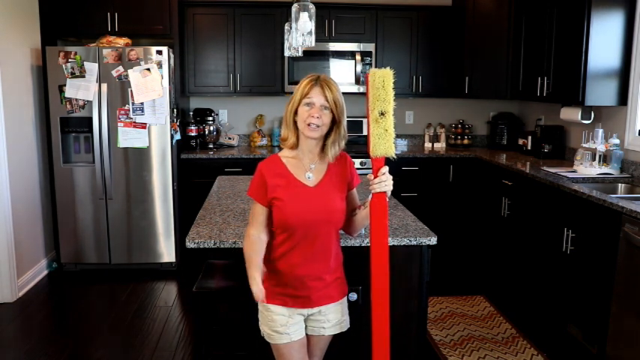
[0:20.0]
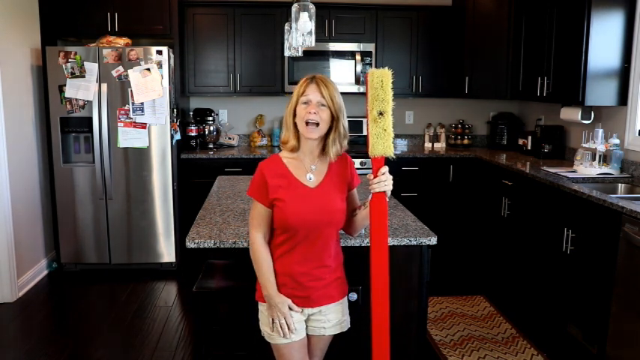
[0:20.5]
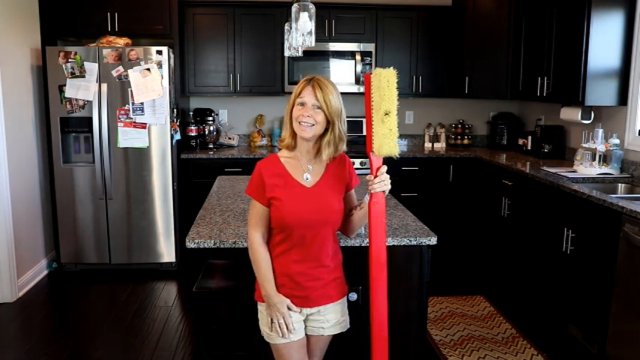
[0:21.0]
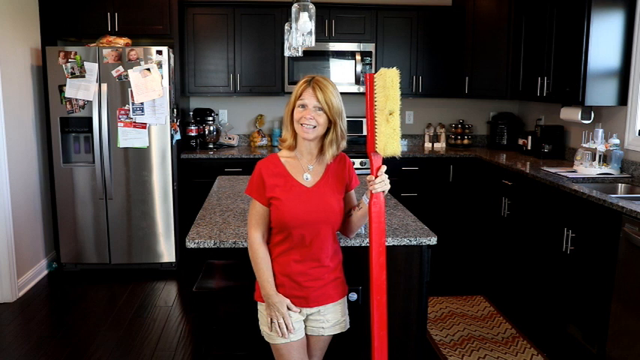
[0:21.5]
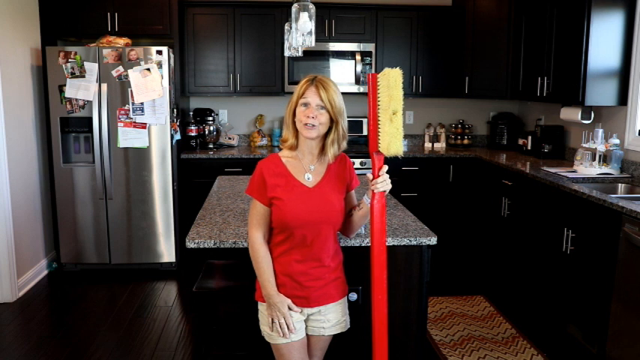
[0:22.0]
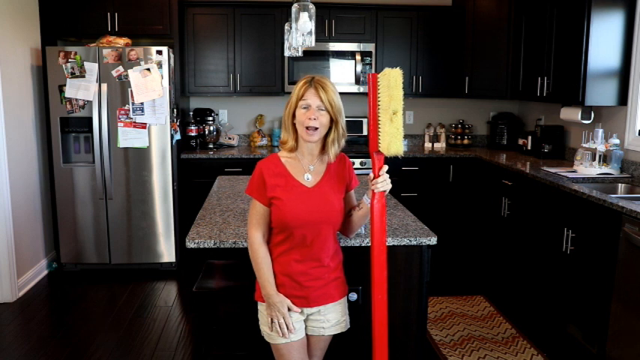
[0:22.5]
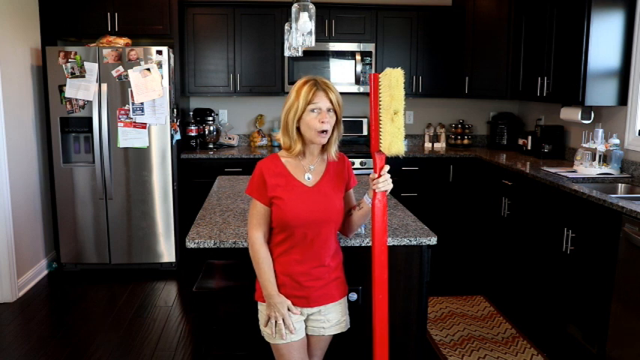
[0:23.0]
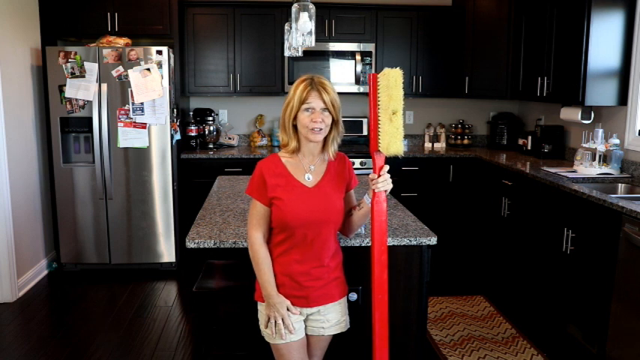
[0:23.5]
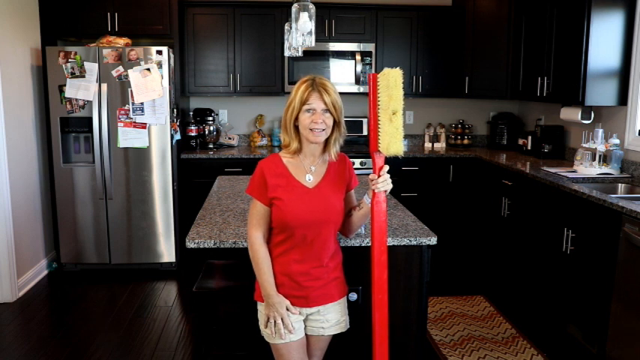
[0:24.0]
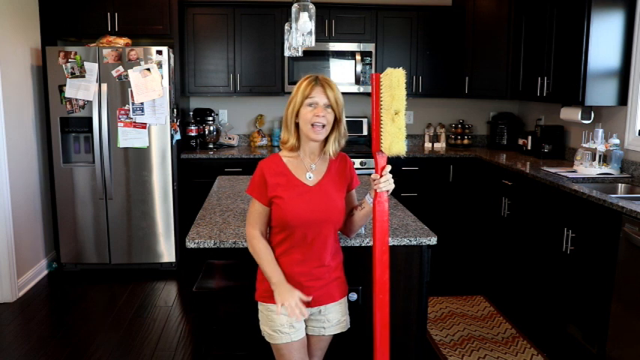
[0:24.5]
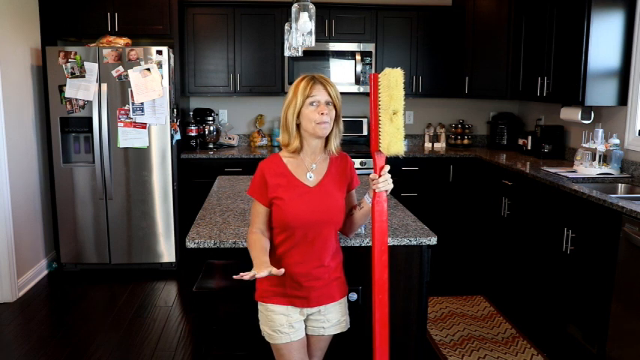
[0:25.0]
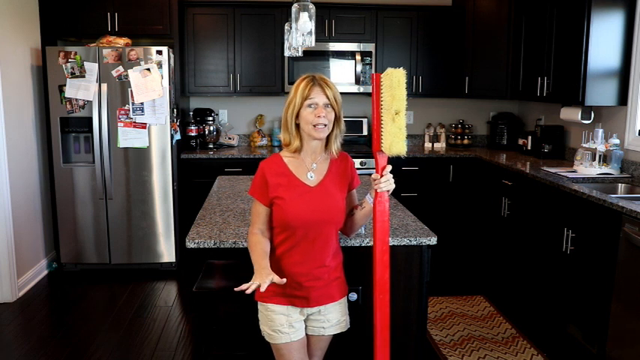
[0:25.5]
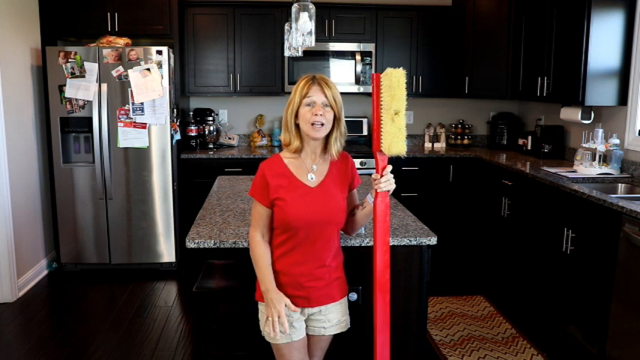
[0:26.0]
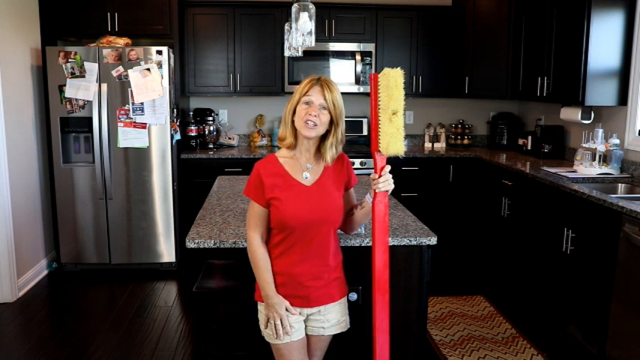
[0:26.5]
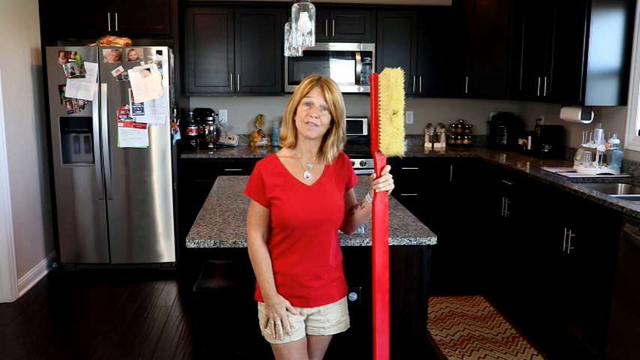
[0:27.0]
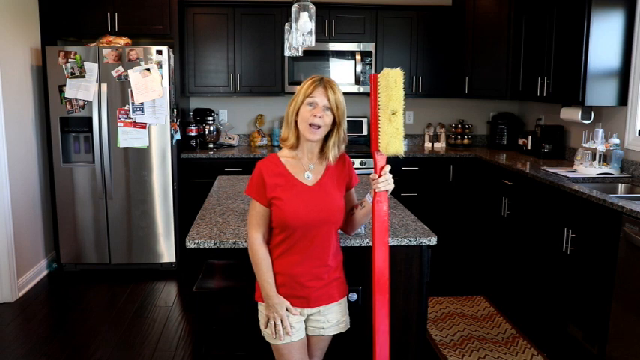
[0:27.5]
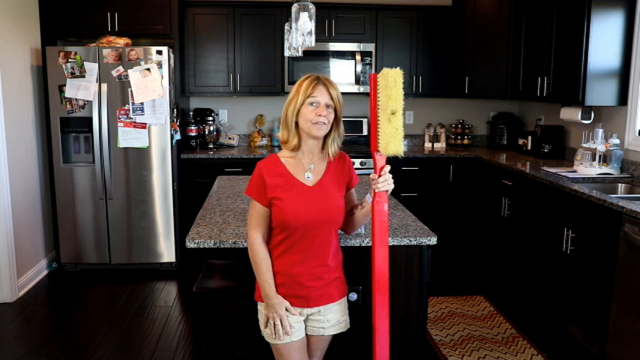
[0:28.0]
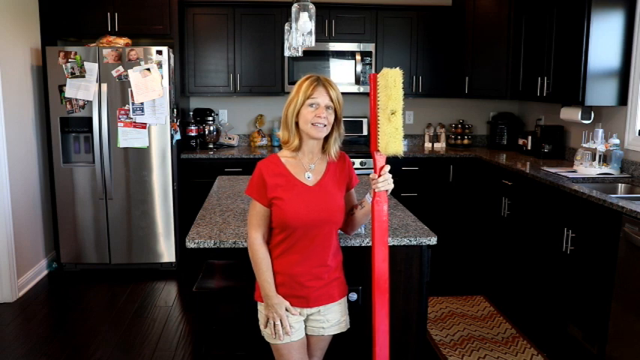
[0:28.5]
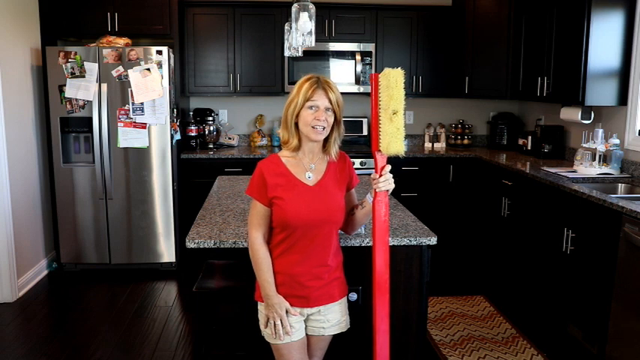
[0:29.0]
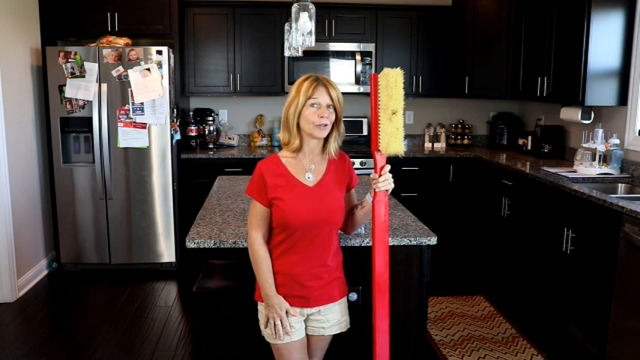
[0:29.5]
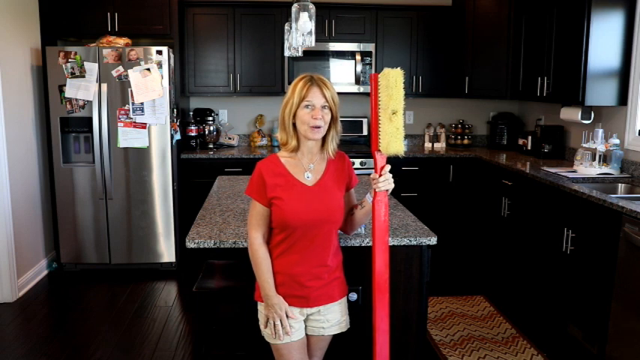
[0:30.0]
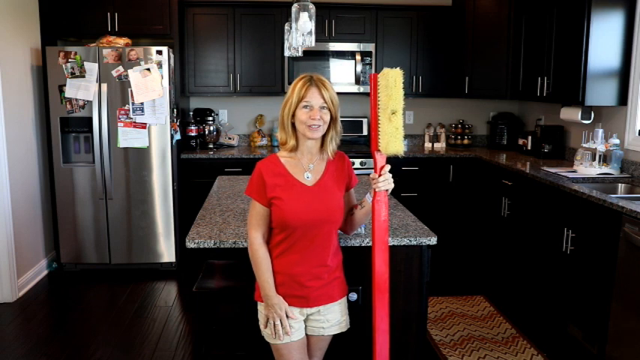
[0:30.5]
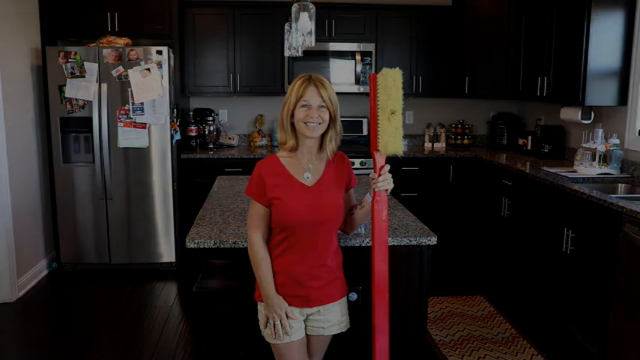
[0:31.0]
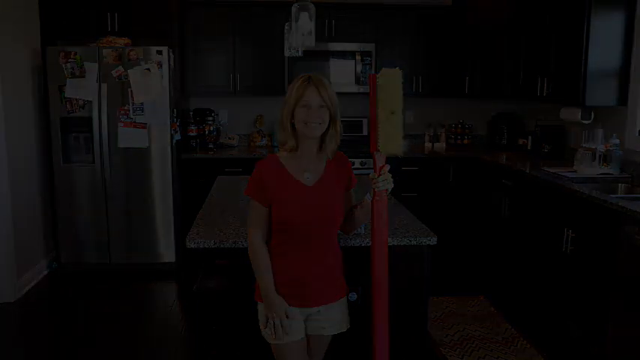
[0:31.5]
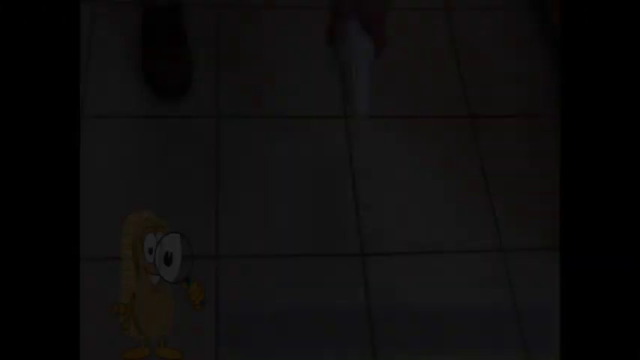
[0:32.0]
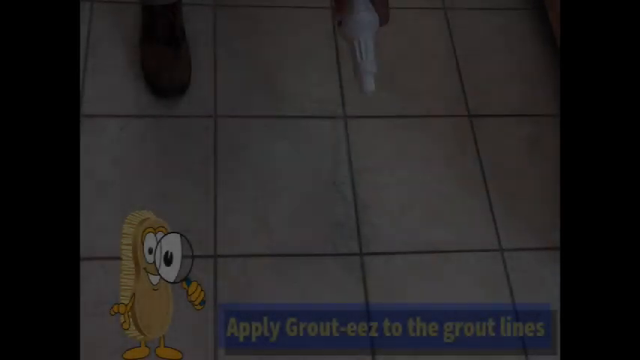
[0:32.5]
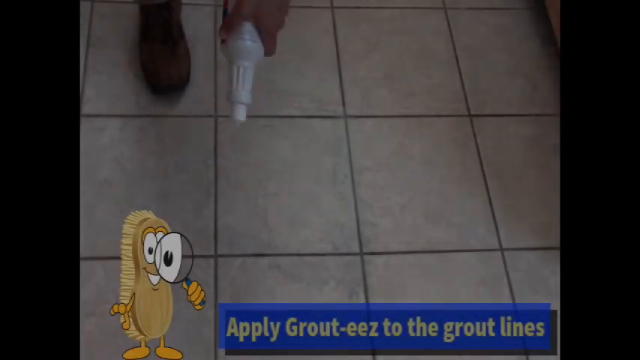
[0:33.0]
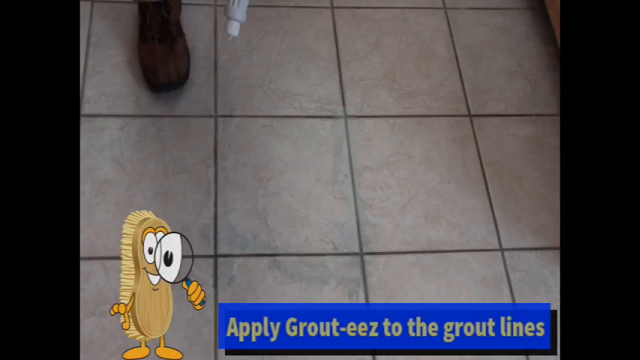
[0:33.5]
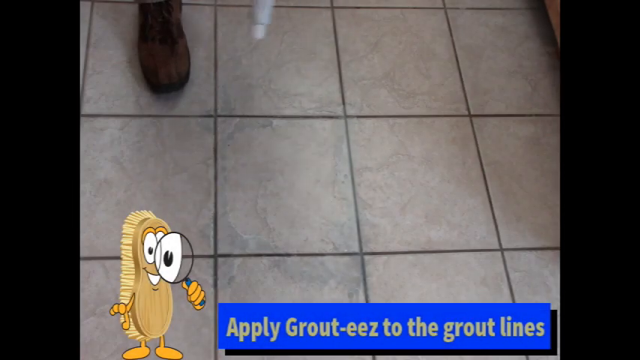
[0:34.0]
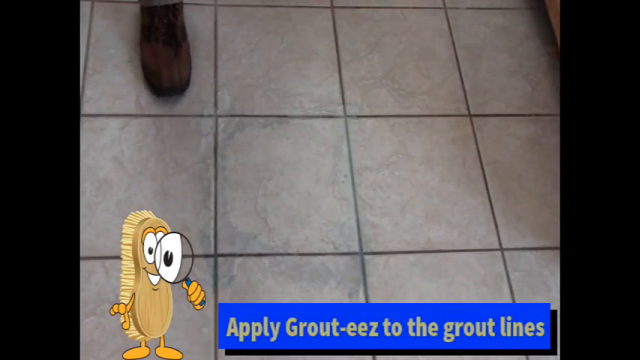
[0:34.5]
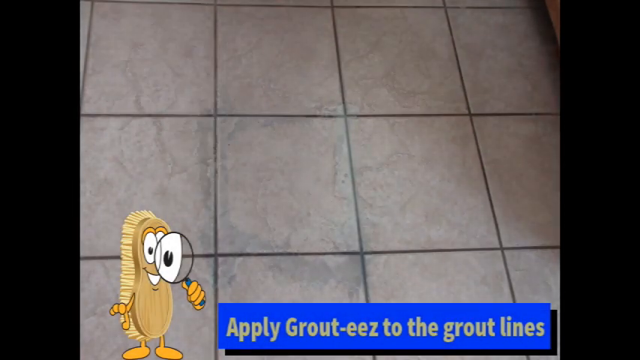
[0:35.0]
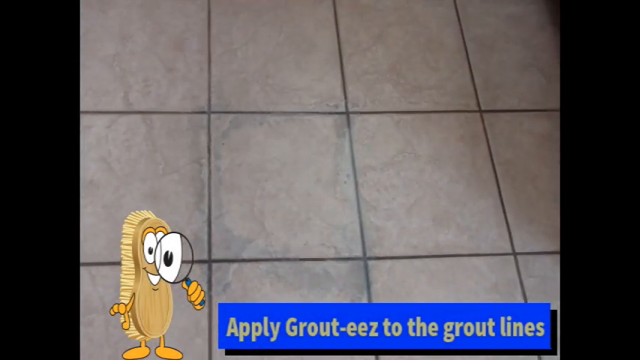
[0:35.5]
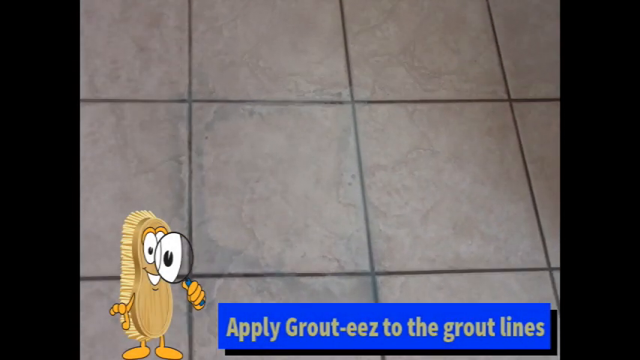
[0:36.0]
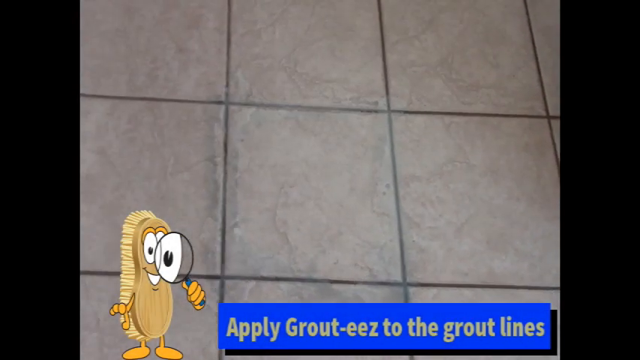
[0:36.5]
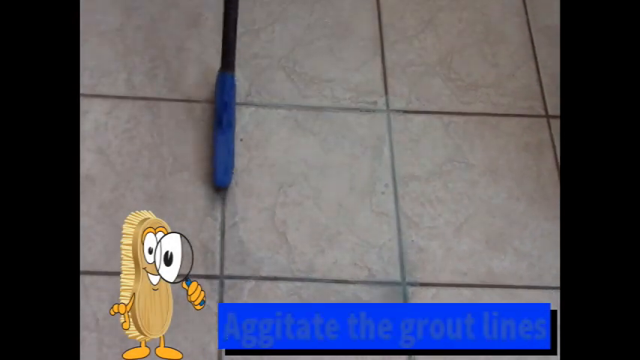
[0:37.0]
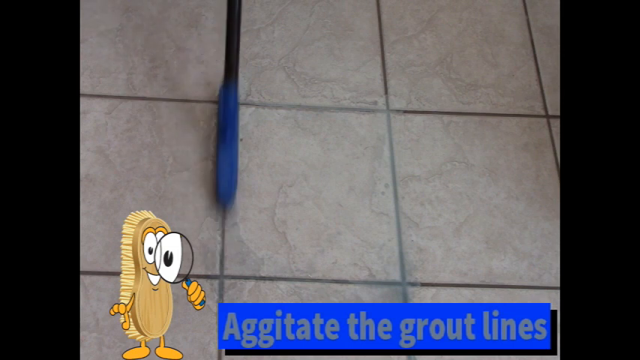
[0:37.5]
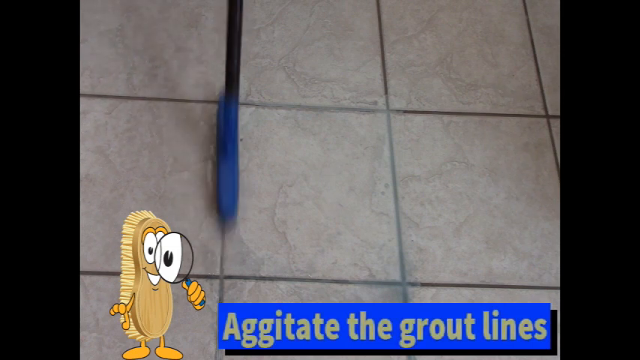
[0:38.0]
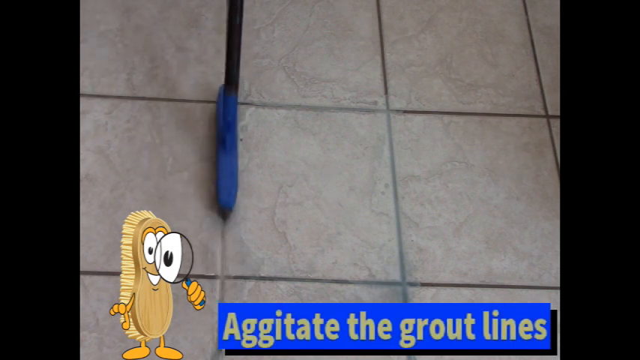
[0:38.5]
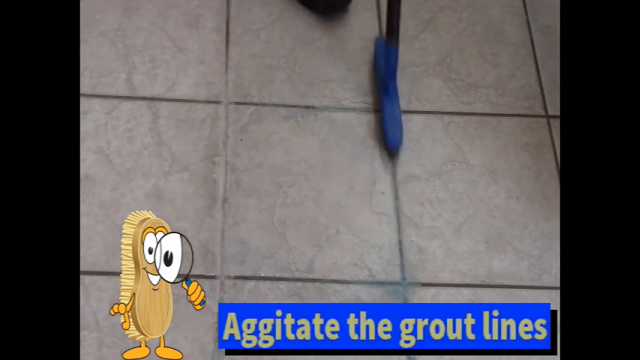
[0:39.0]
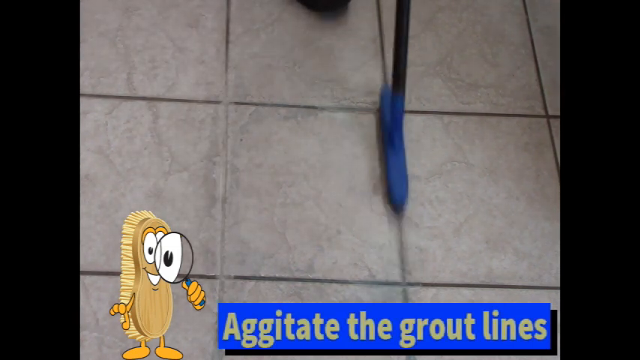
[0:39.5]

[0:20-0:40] A woman is at the center, wearing a red short-sleeved shirt and short gray shorts. In her left hand she holds a red, long-handled toothbrush with yellow bristles. She is standing on a dark brown hardwood floor. The cabinets behind her are all dark brown with silver-lined handles. On the left side there is a white-framed, slightly off-white wall, and beside it a silver metal fridge with white sheets of paper and photographs of children on the front. At the far right there is a white frame and a silver sink. Directly behind her is a white-and-black dotted granite countertop and a silver-and-black microwave, with a silver-and-black stove below it. At the top are two glass lightbulb lights. The scene changes to a gray tiled floor. A blue box below reads in white lettering "supply grout, easy to the grout lines." On the left side is a brown brush with brown bristles, orange hands, white eyes and white teeth. She has a white bottle in her hand, has sprayed some solution on the white tile grout, and scrubs the tile grout with a blue brush with a black handle.